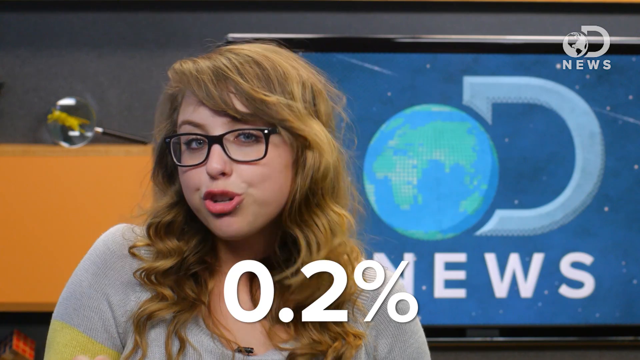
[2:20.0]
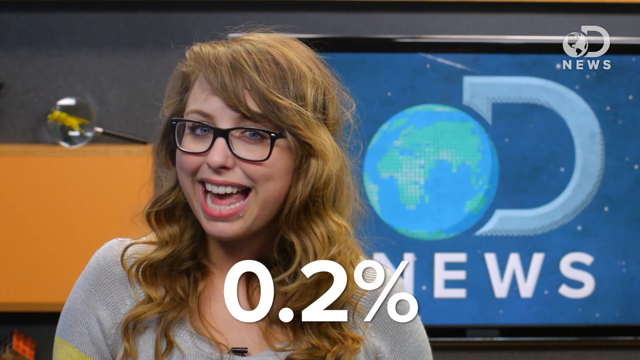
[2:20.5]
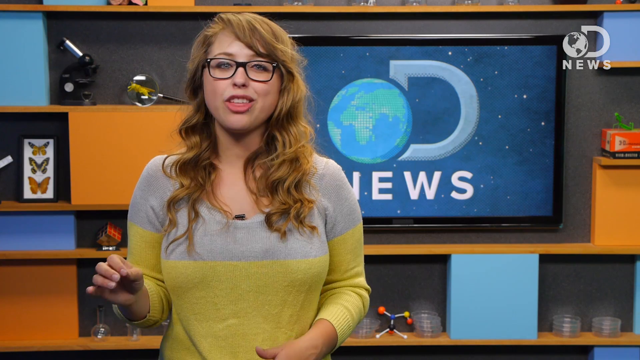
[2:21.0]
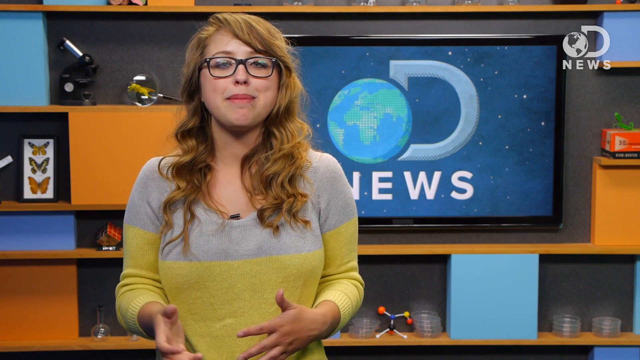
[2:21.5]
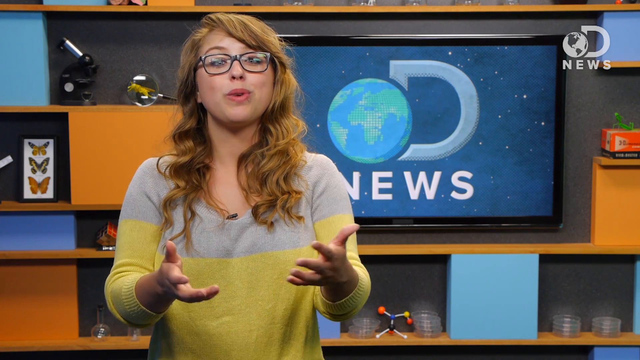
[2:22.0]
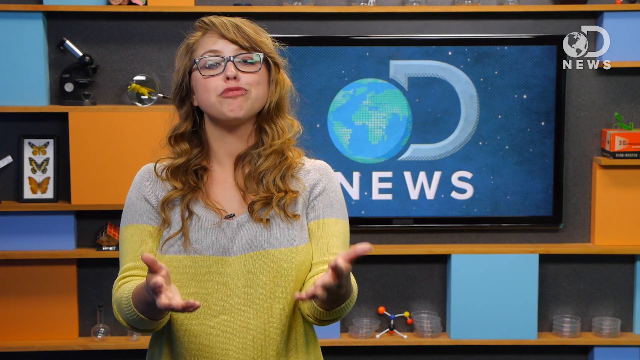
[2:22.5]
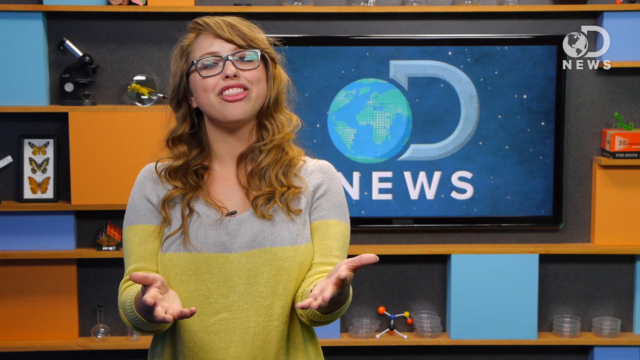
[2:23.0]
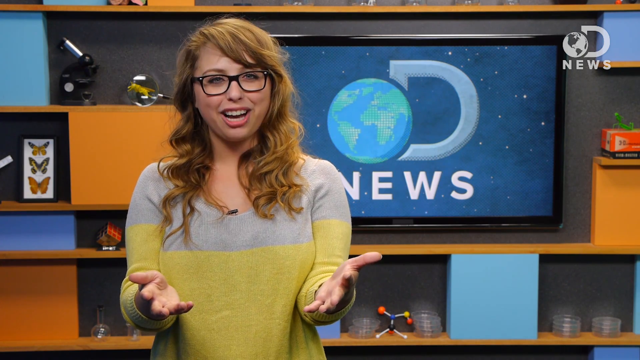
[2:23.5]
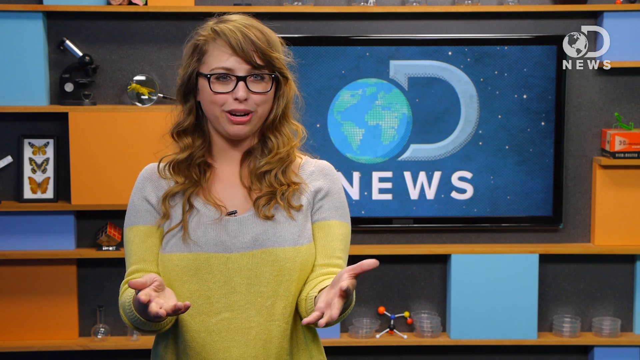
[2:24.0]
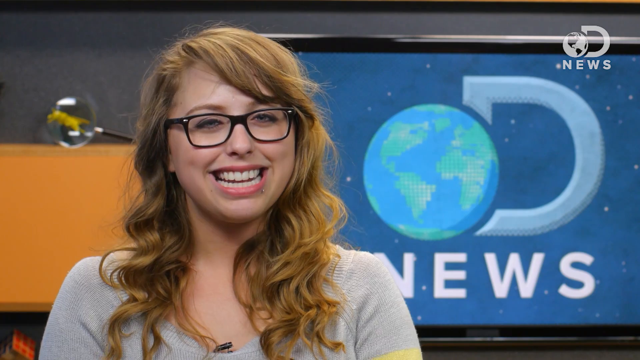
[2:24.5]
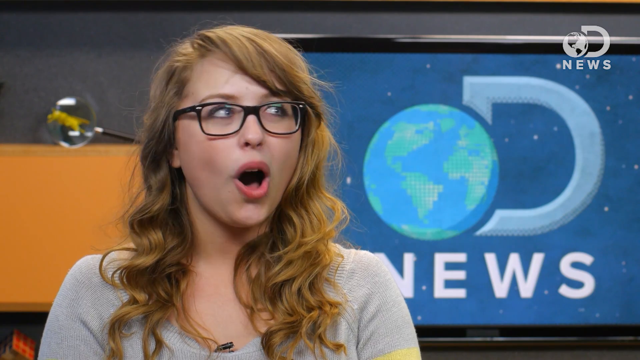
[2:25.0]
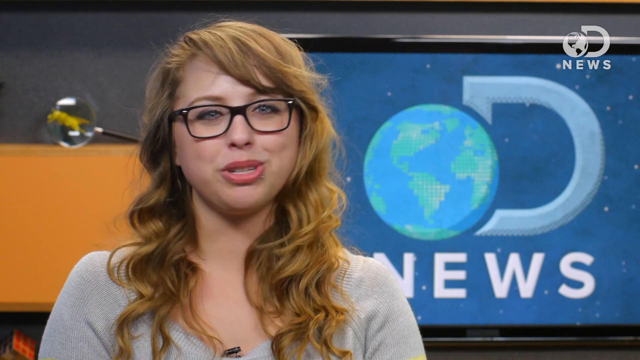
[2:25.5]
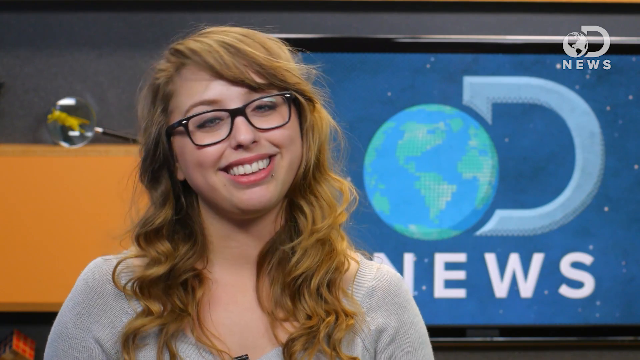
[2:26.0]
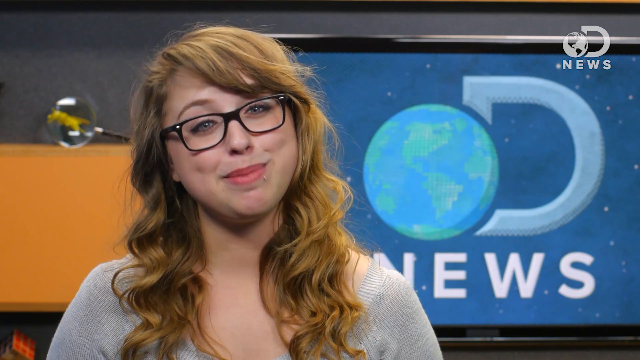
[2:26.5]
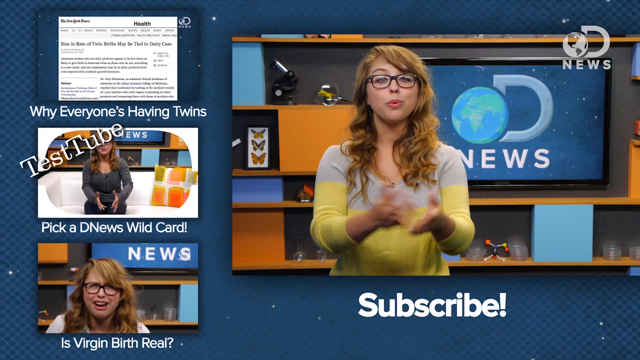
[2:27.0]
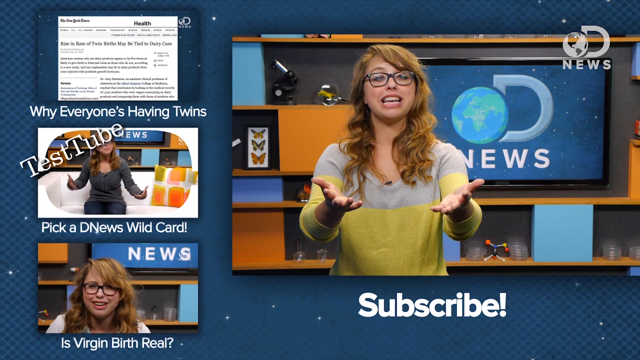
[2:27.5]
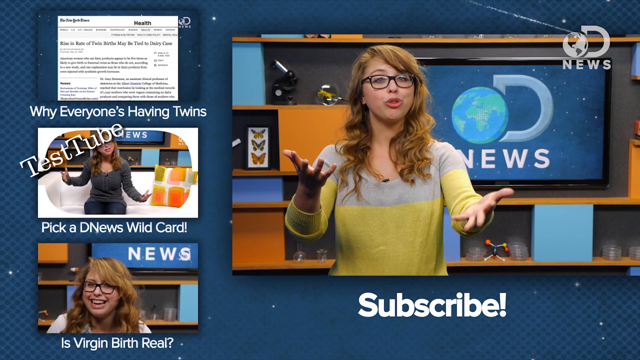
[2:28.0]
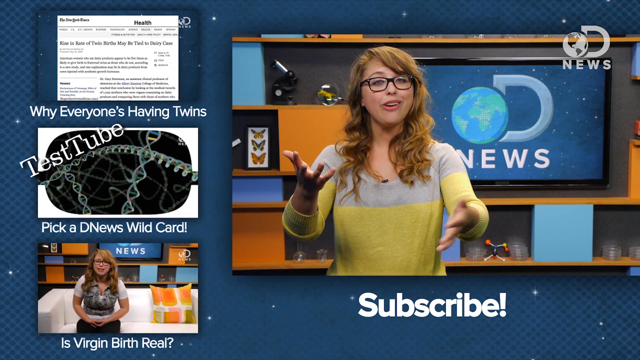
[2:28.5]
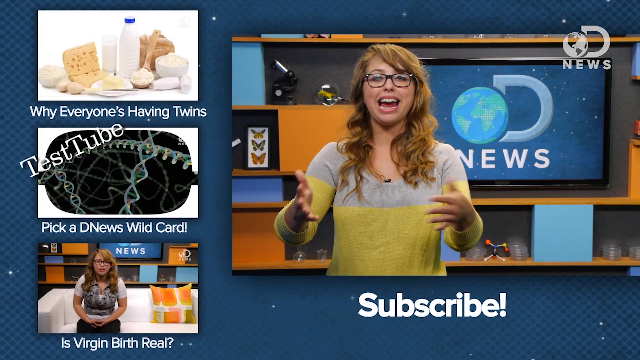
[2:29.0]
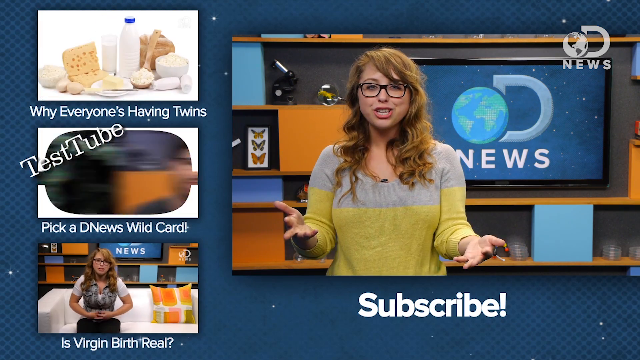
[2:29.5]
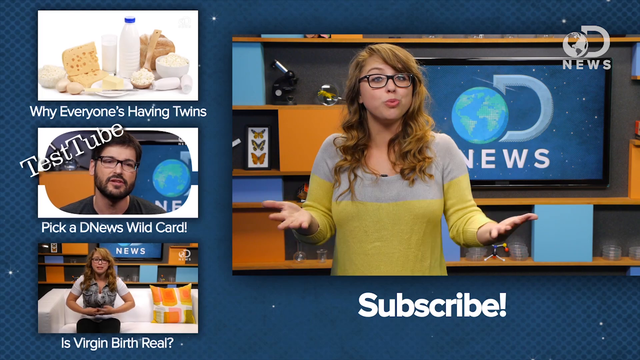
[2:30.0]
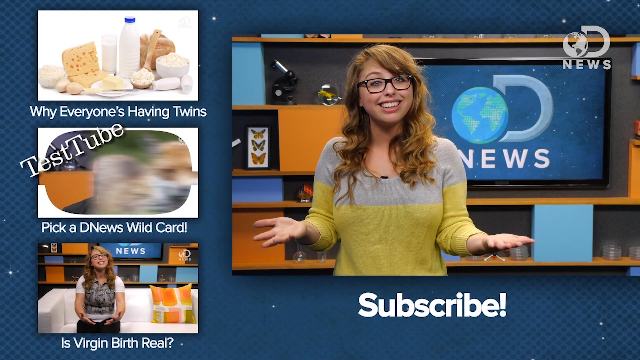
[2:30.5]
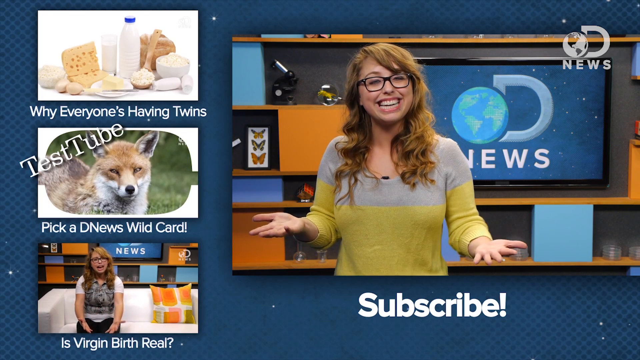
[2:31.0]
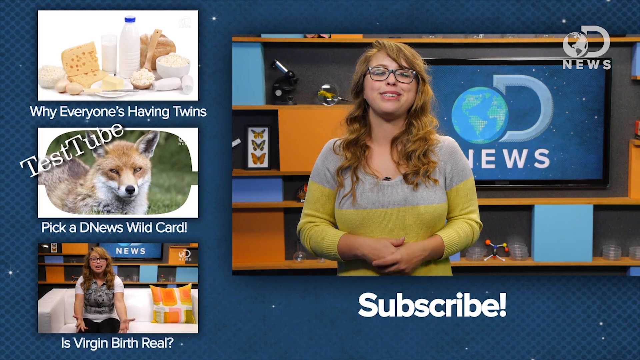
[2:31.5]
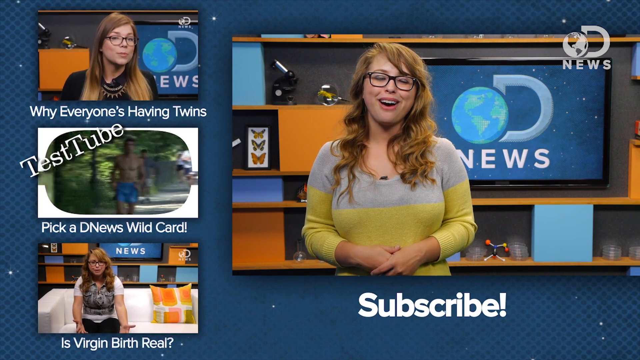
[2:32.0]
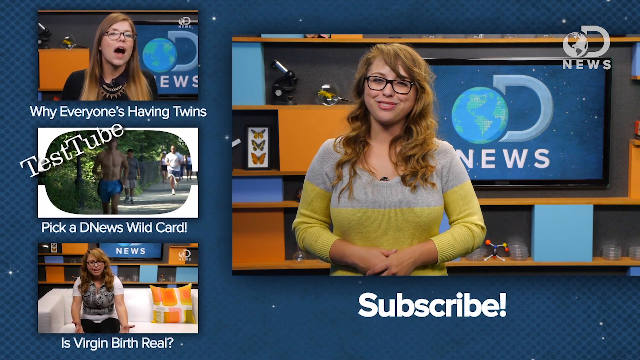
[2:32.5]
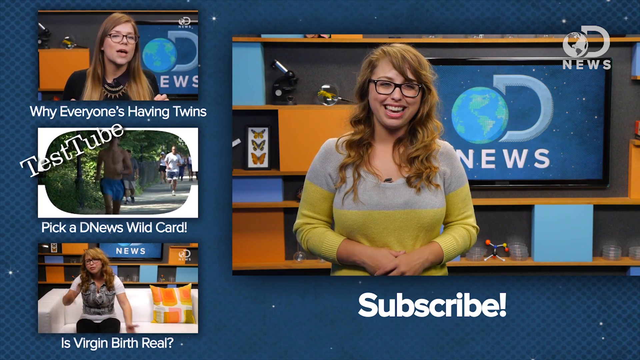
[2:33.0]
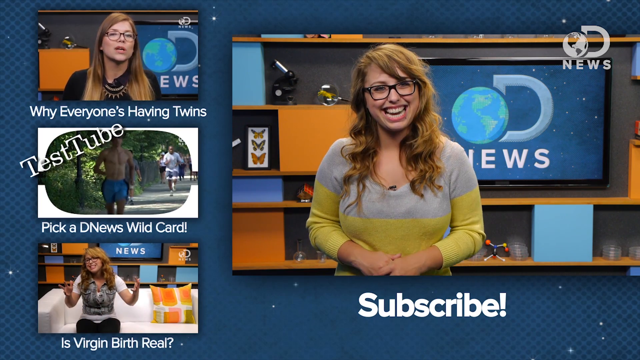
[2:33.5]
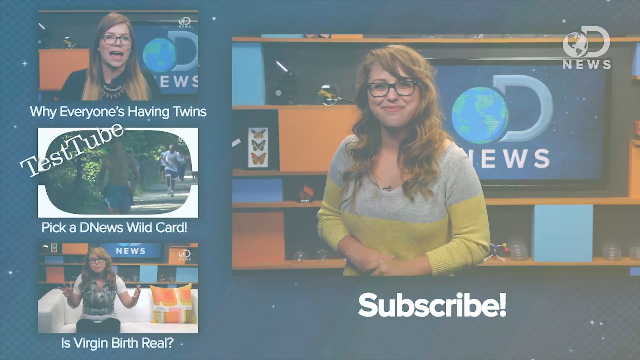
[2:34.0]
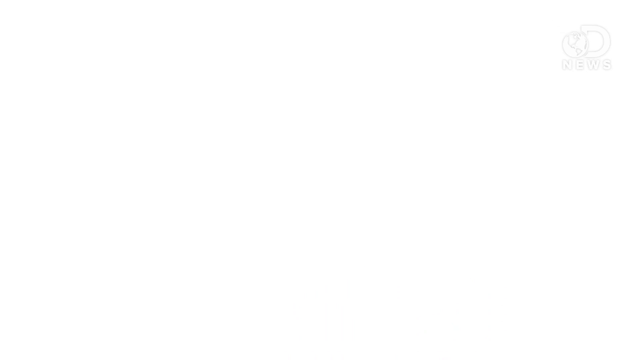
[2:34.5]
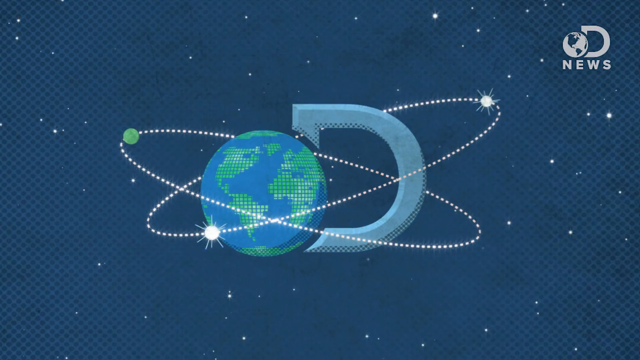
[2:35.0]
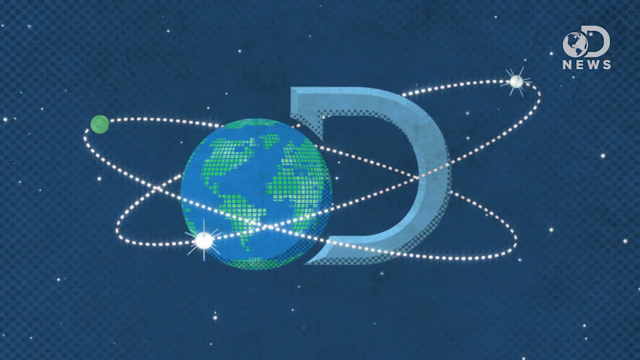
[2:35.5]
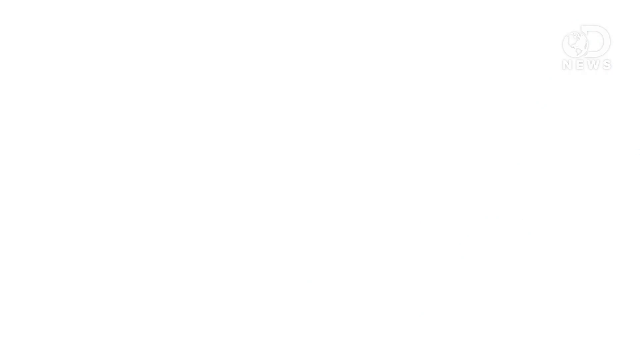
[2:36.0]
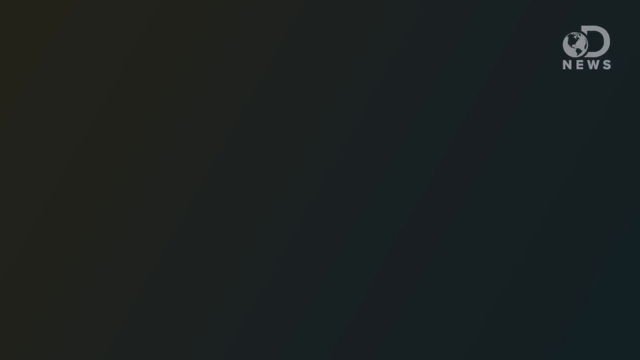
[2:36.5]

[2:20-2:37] Lori speaks in her classroom with "0.2%" in white at the bottom of the screen, using her hands, face and eyes expressively. She points her hands out toward the audience and clasps her hands as she ends. Other videos featuring Lori then pop up, in which she seems to be reporting as well. At the end, the OD News logo is on the screen on a blue backdrop that looks like stars in the sky, with the OD surrounded by what appear to be neurons.